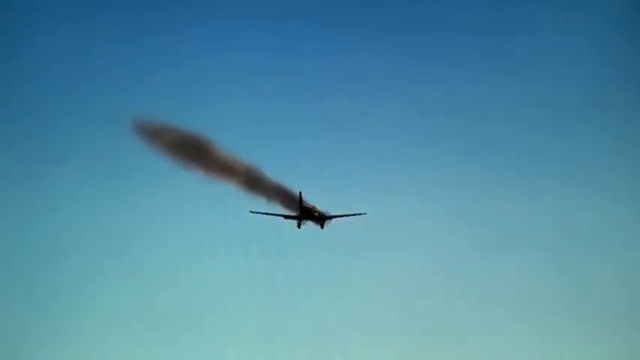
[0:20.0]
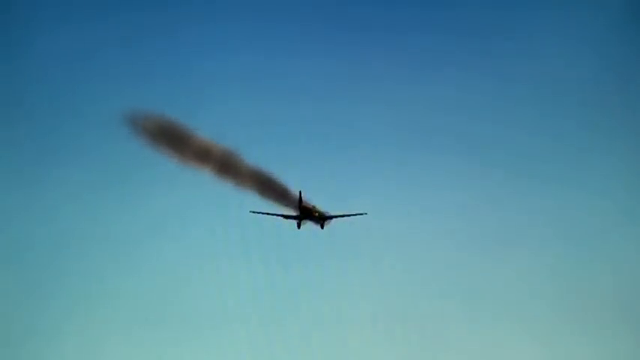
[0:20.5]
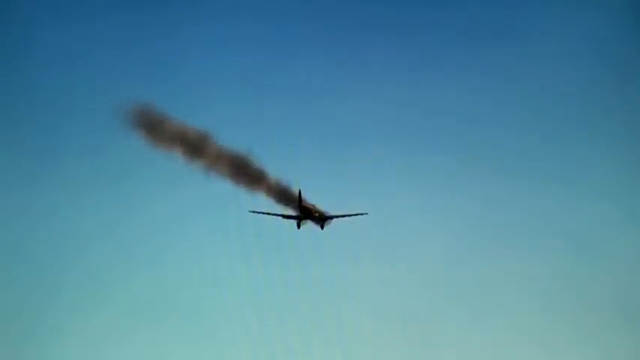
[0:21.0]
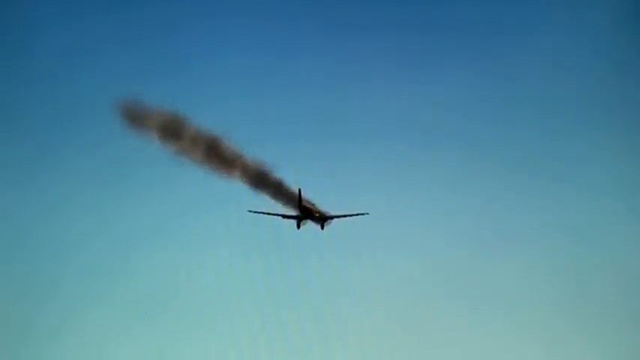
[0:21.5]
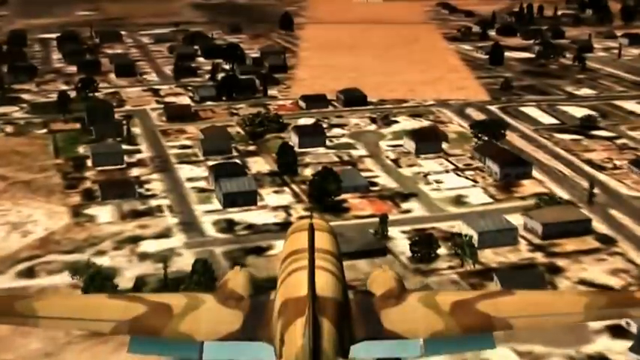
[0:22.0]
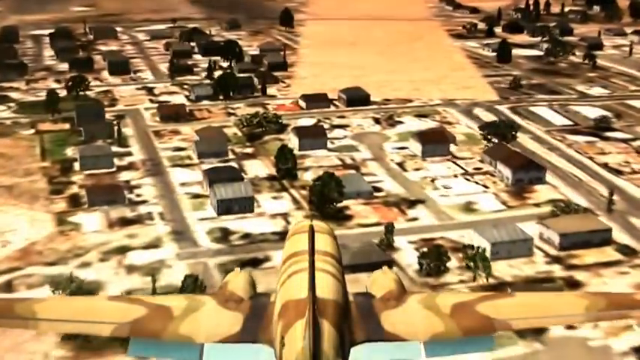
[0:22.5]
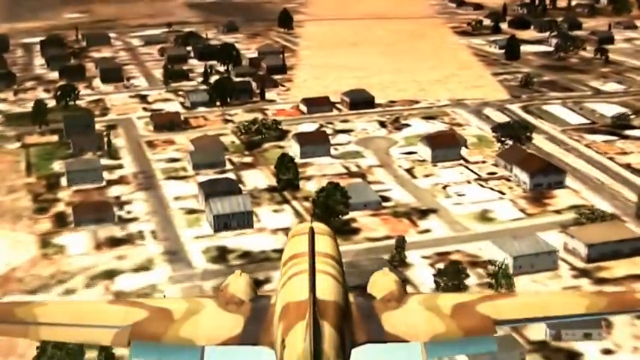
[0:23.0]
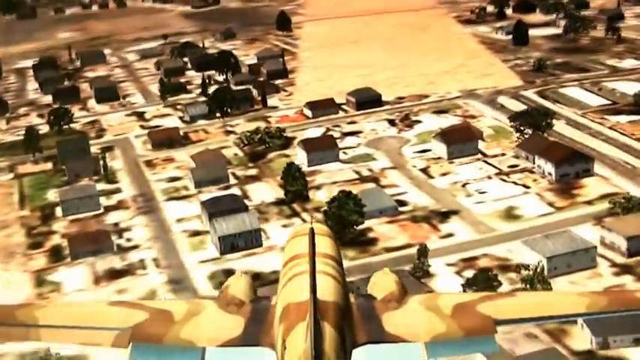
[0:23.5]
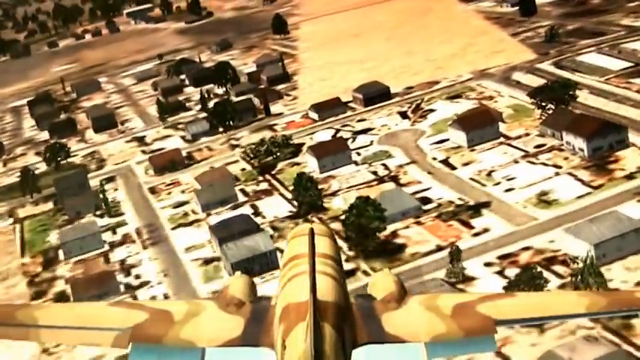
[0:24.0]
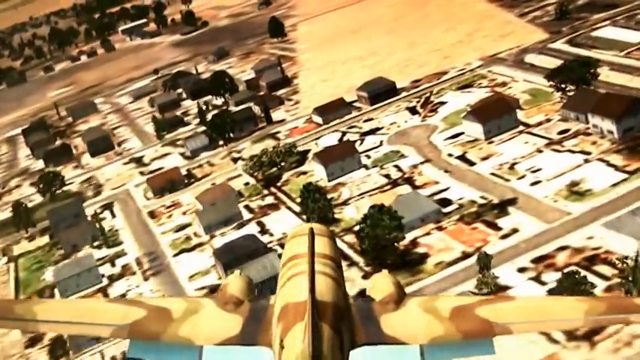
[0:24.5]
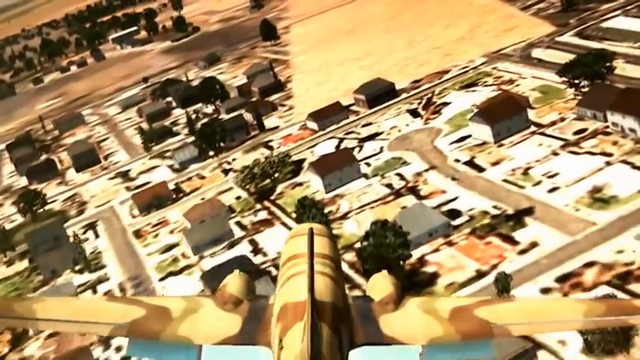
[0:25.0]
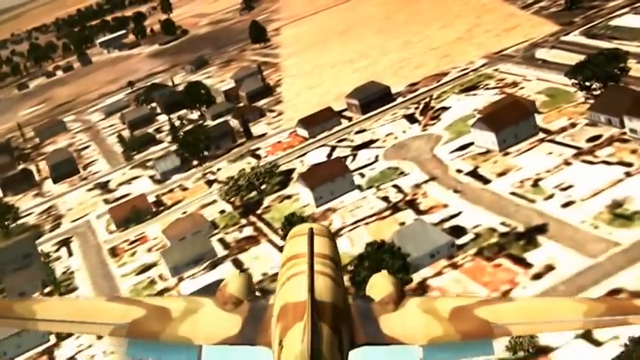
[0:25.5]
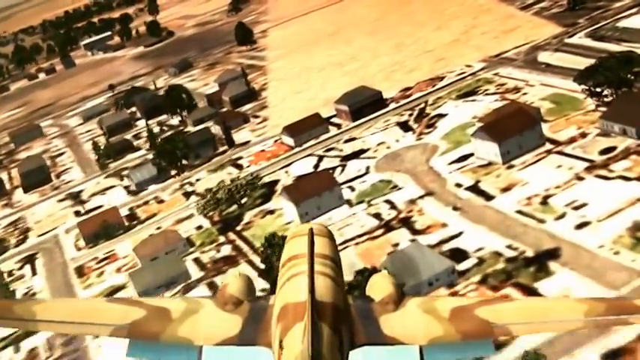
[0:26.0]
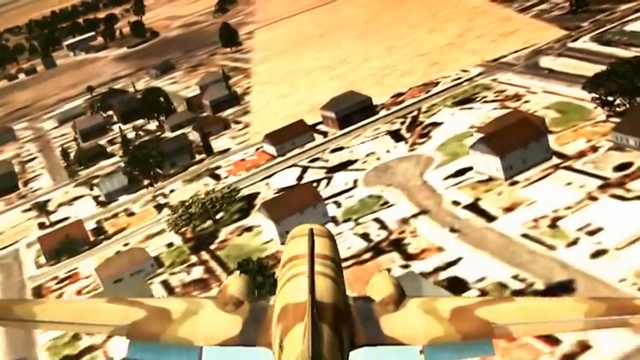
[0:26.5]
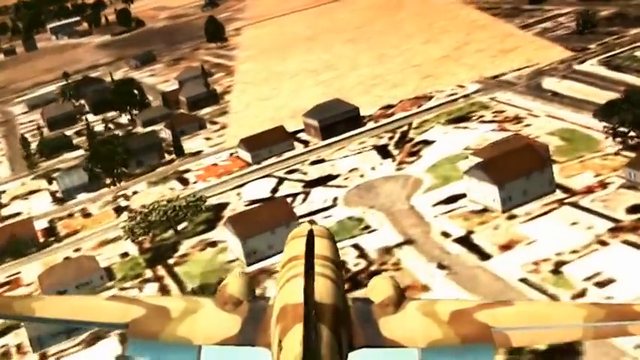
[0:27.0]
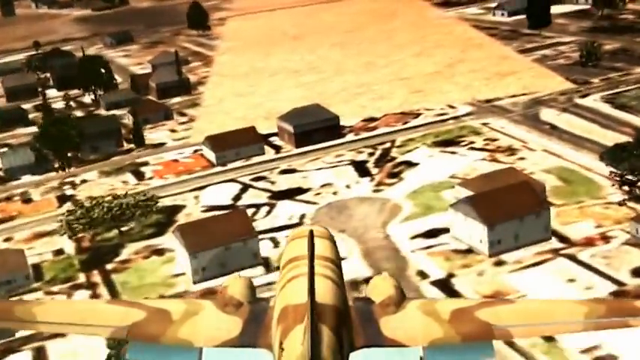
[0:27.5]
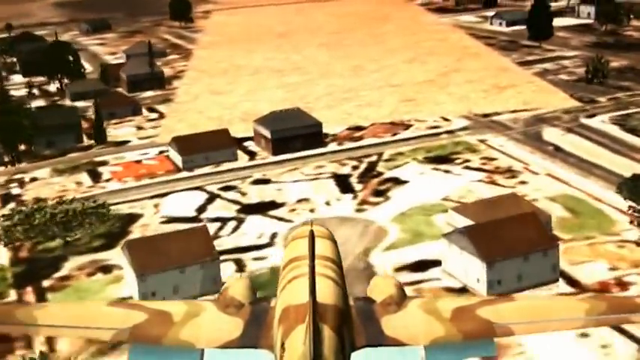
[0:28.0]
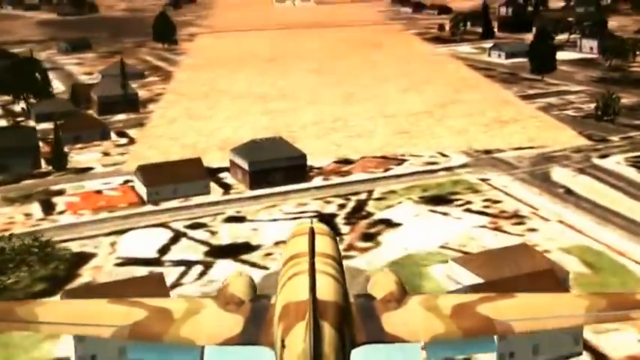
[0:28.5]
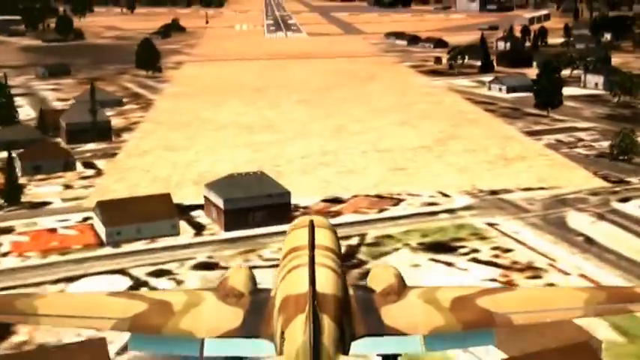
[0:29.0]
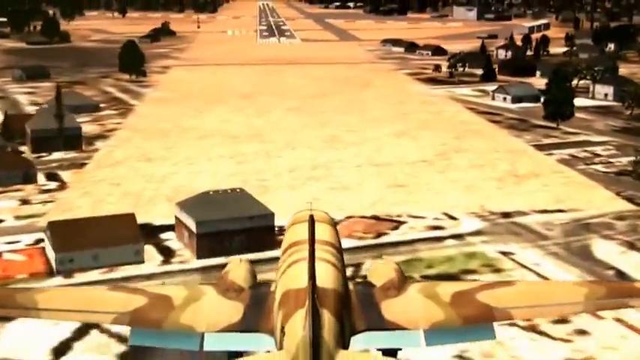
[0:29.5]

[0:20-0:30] The video game shows an airplane being piloted. First, the camera looks up from below and behind the plane against the blue sky, showing the black silhouette of the plane with its landing gear down and smoke trailing. The view then moves behind the plane, just past the tail, showing the wings and engines of the camouflaged airplane. In the distance are houses, yards, streets and a desert area. Up ahead is an empty brown strip of land, and beyond it is the airport runway, black with white paint on it. The plane is trying to line up to land on that runway.